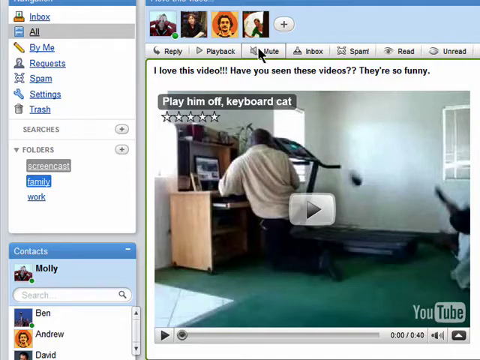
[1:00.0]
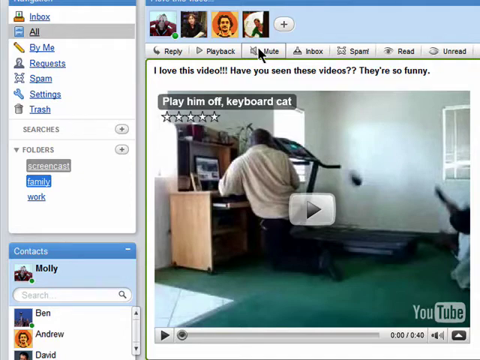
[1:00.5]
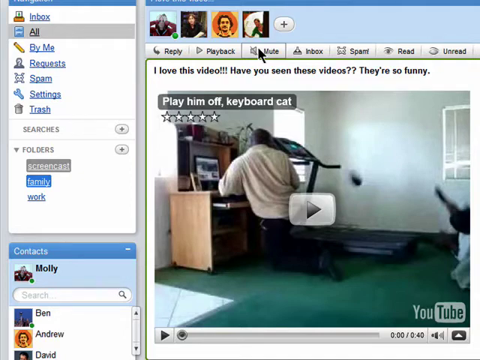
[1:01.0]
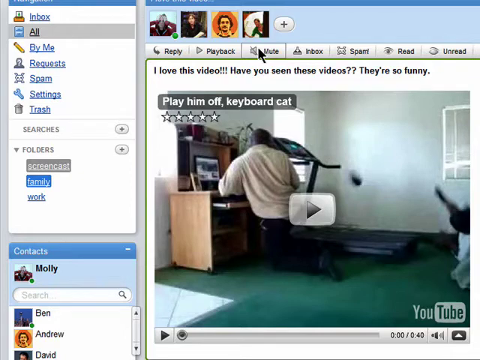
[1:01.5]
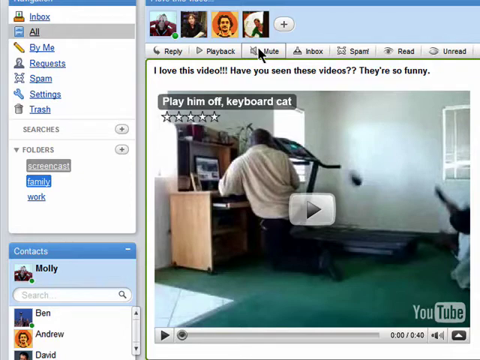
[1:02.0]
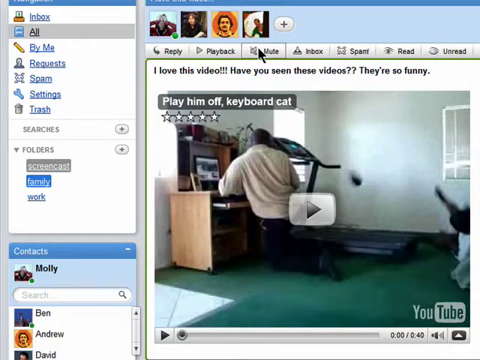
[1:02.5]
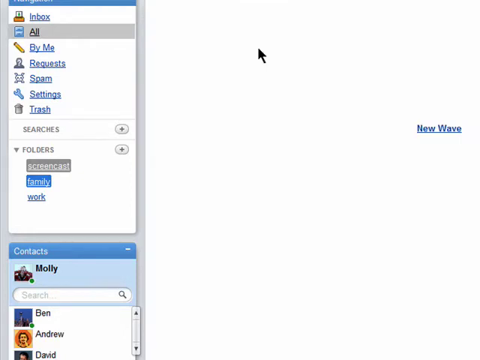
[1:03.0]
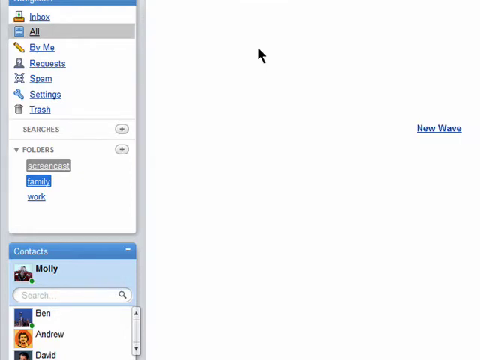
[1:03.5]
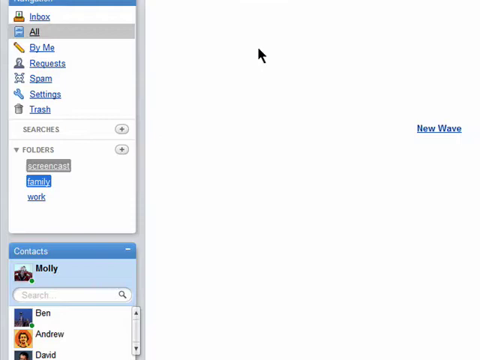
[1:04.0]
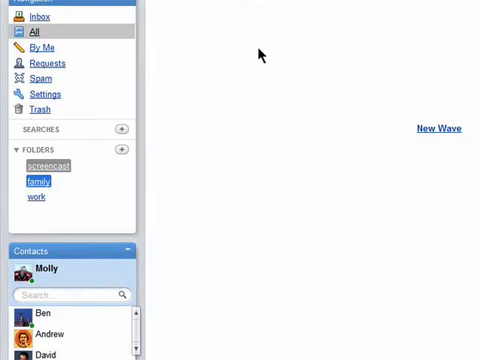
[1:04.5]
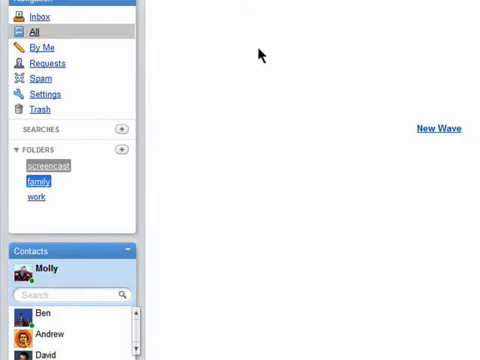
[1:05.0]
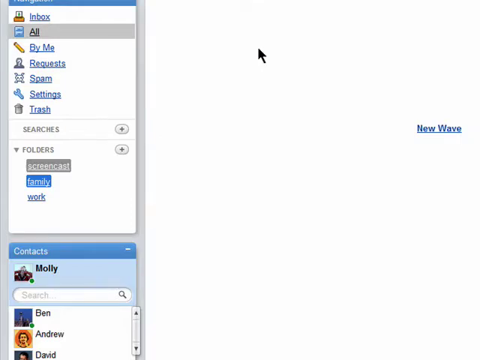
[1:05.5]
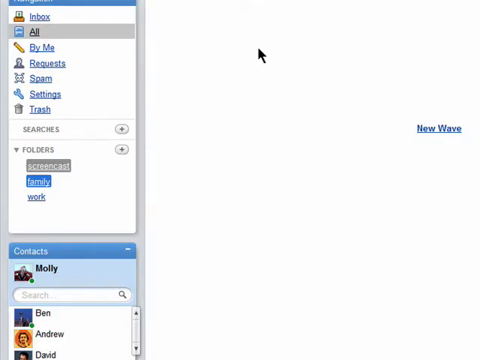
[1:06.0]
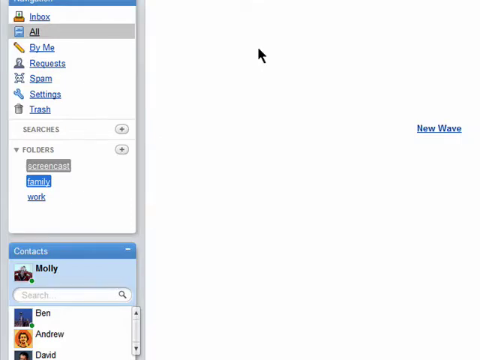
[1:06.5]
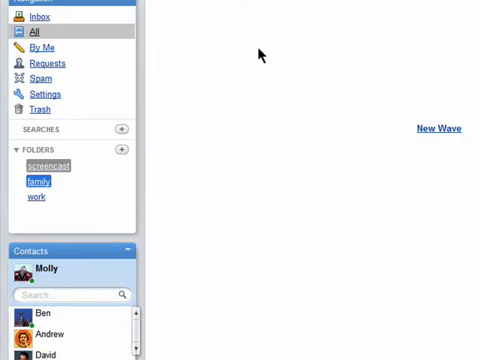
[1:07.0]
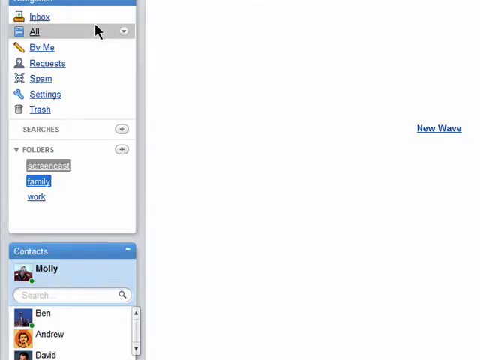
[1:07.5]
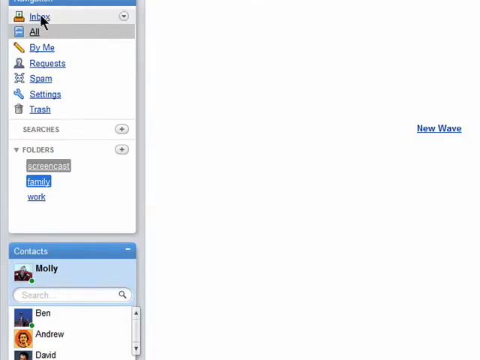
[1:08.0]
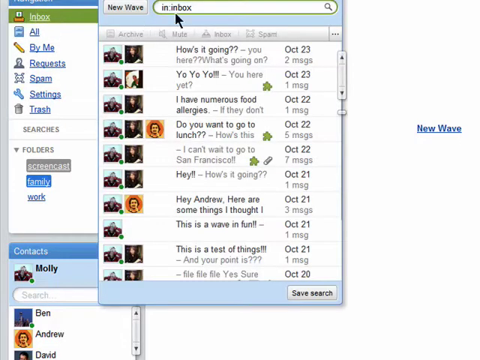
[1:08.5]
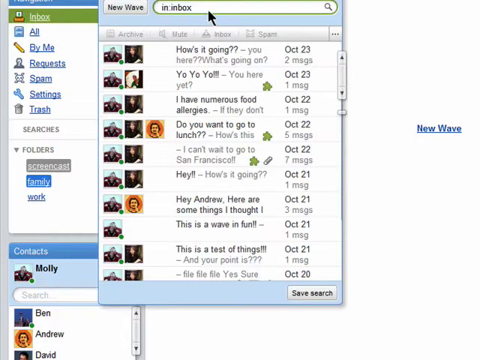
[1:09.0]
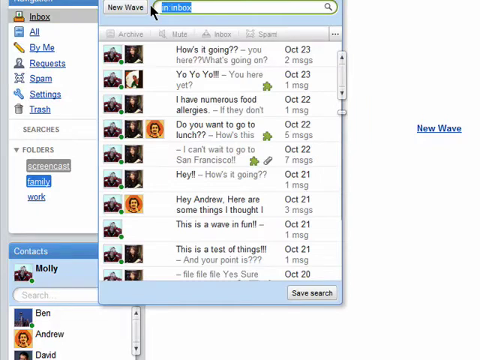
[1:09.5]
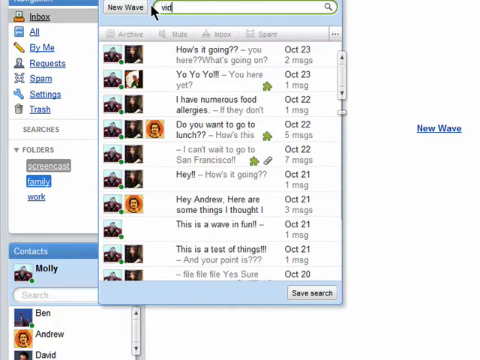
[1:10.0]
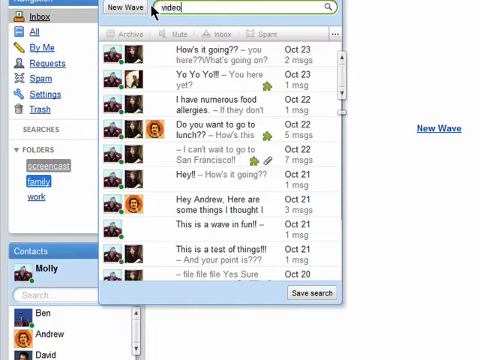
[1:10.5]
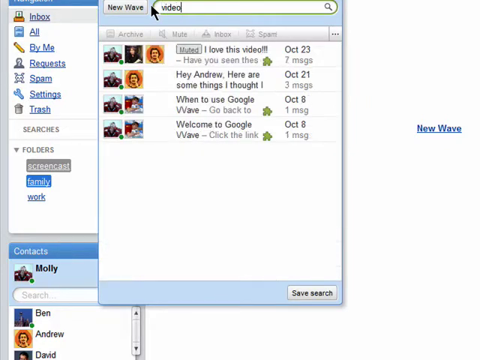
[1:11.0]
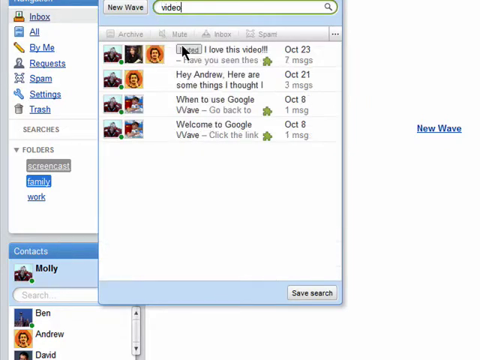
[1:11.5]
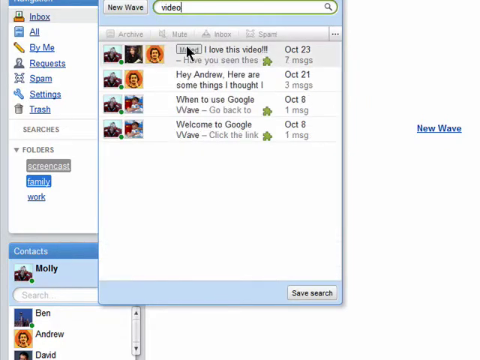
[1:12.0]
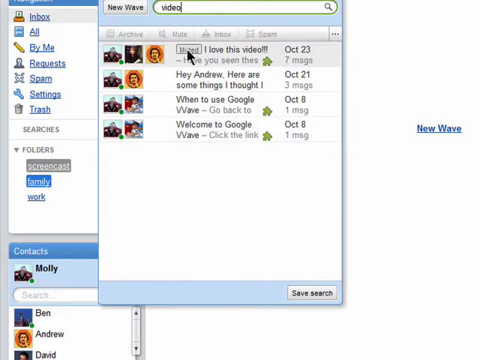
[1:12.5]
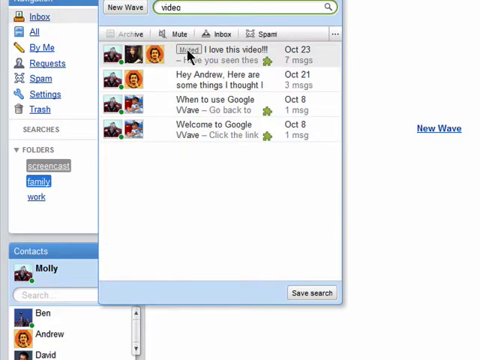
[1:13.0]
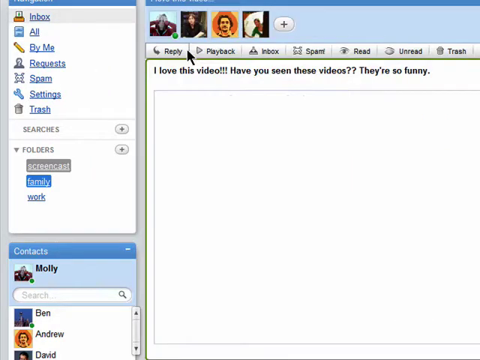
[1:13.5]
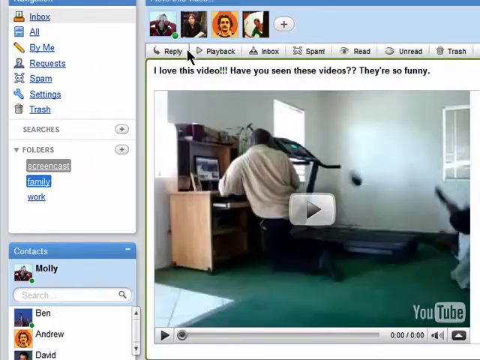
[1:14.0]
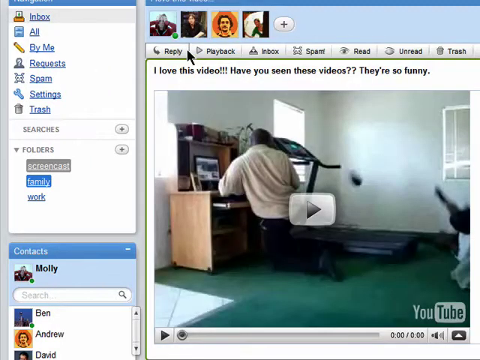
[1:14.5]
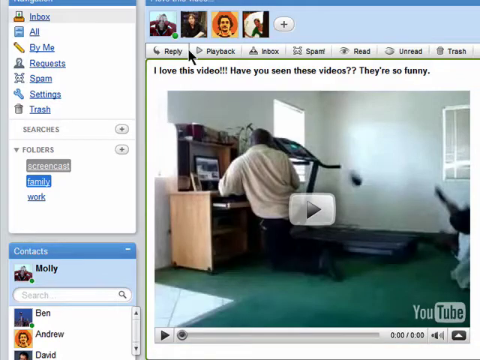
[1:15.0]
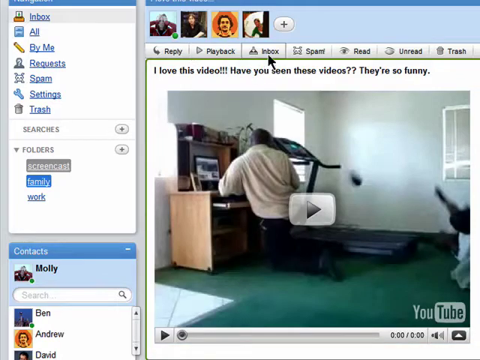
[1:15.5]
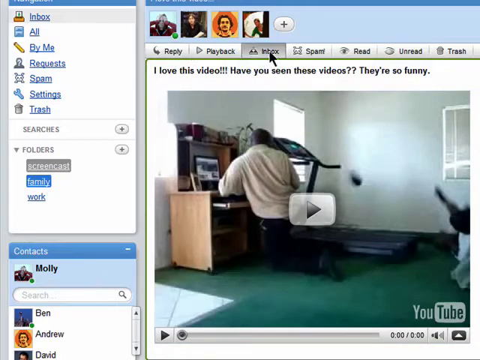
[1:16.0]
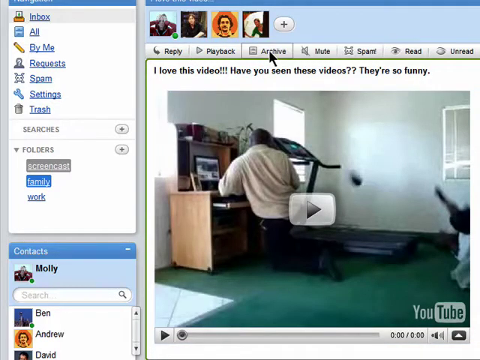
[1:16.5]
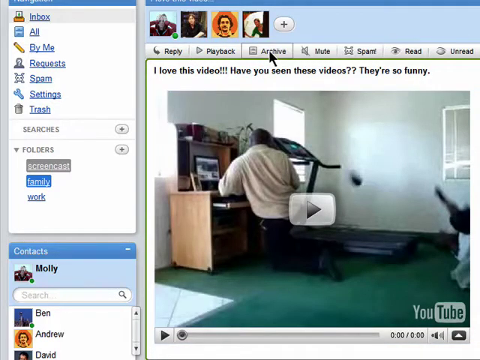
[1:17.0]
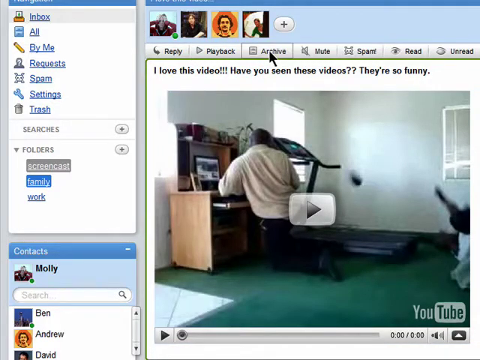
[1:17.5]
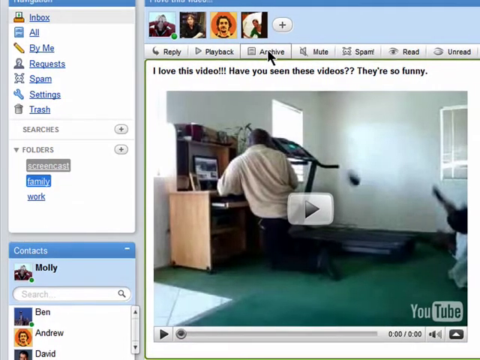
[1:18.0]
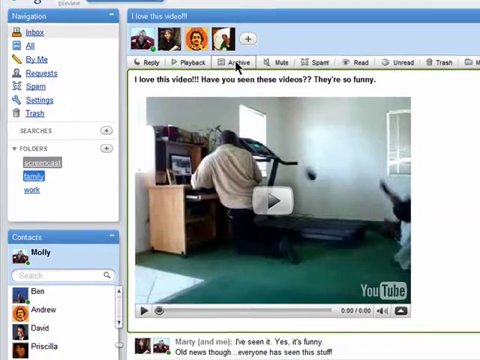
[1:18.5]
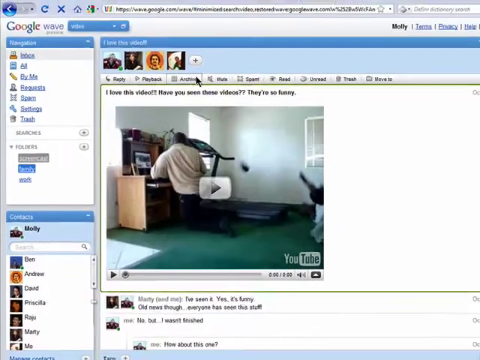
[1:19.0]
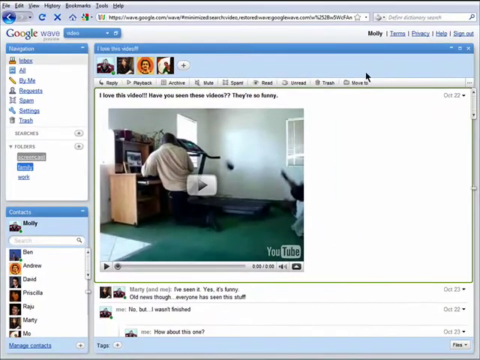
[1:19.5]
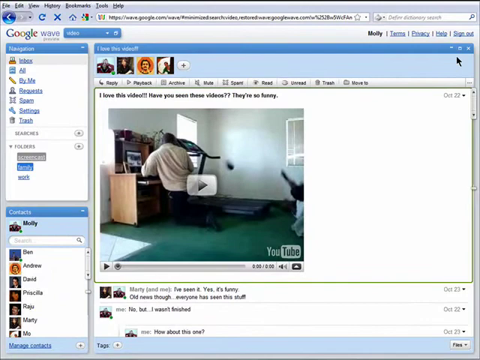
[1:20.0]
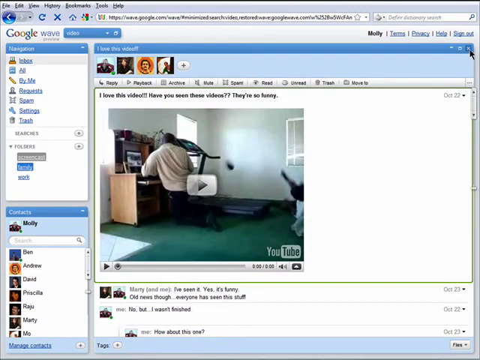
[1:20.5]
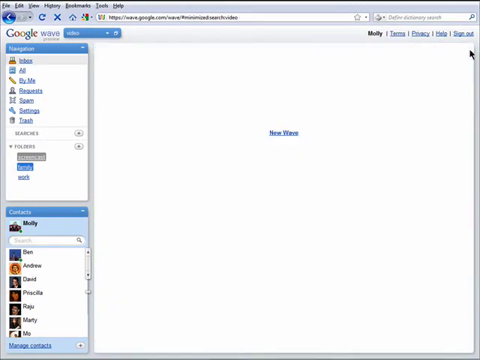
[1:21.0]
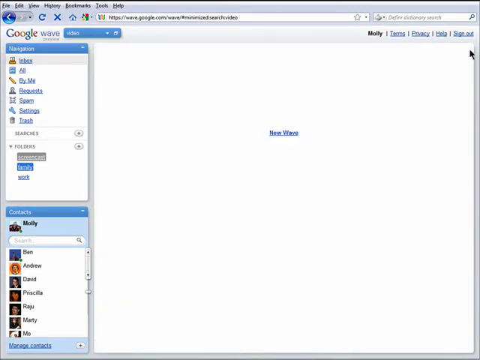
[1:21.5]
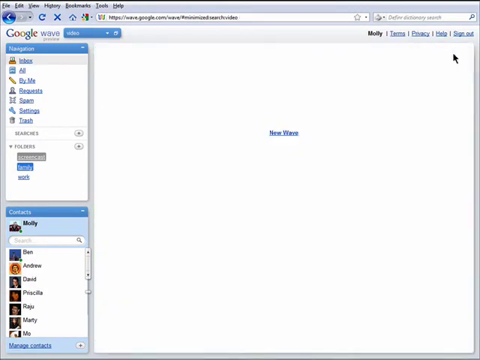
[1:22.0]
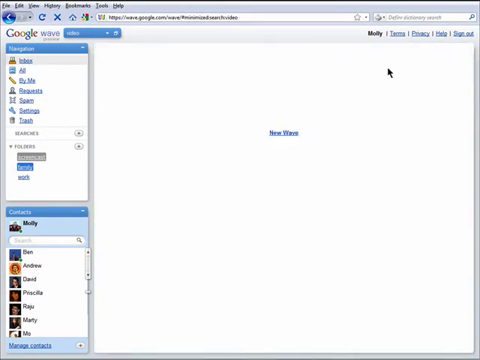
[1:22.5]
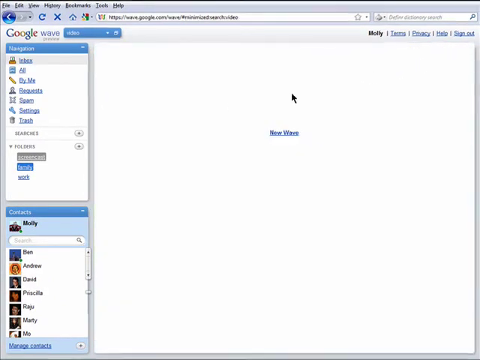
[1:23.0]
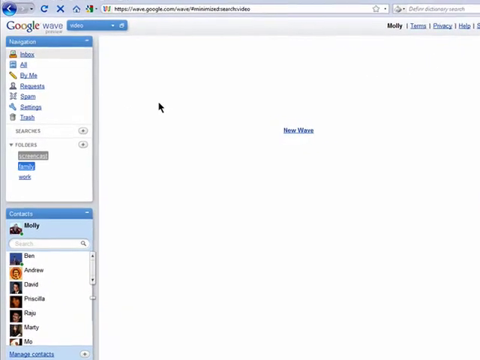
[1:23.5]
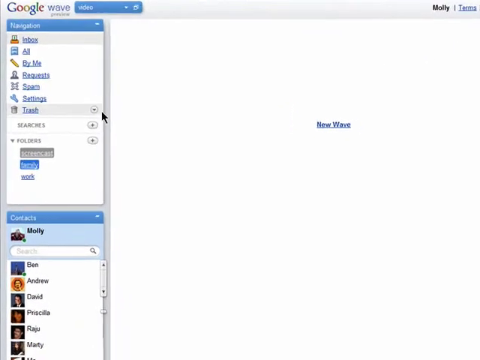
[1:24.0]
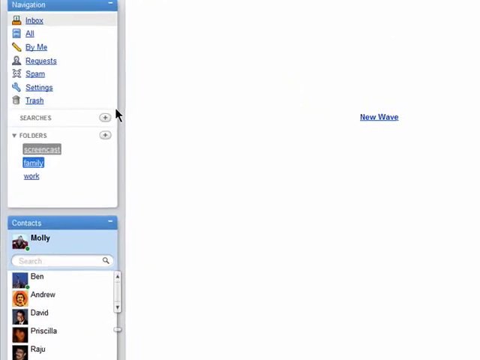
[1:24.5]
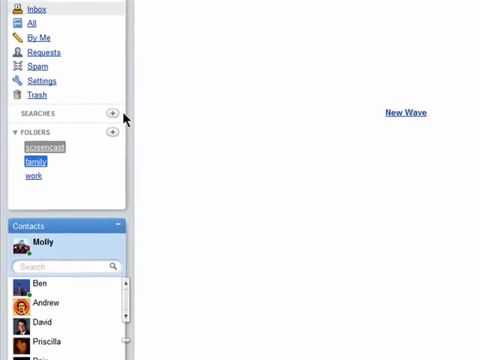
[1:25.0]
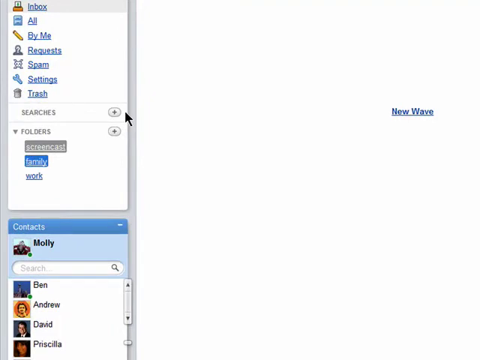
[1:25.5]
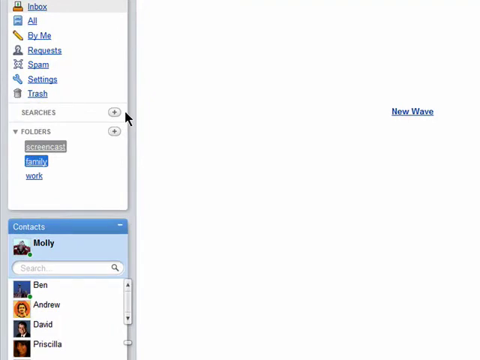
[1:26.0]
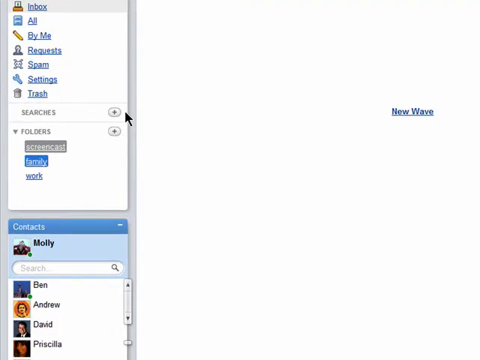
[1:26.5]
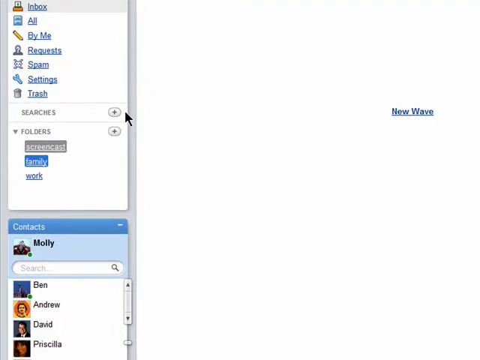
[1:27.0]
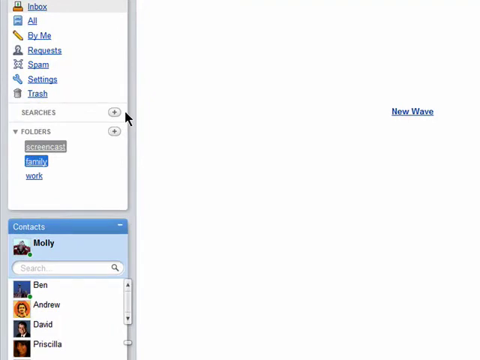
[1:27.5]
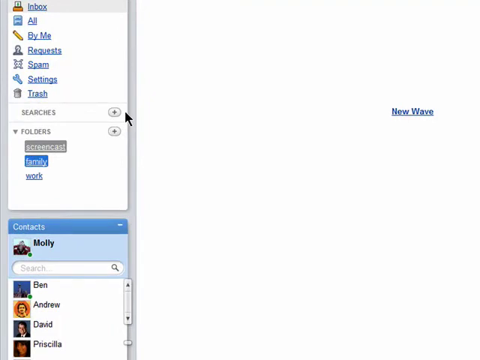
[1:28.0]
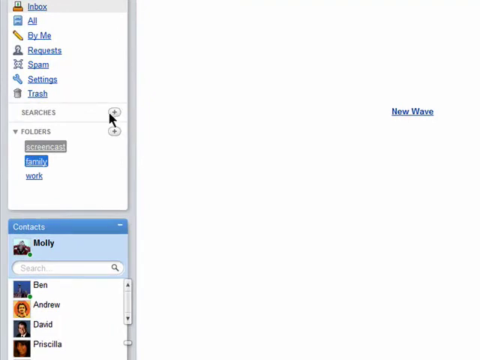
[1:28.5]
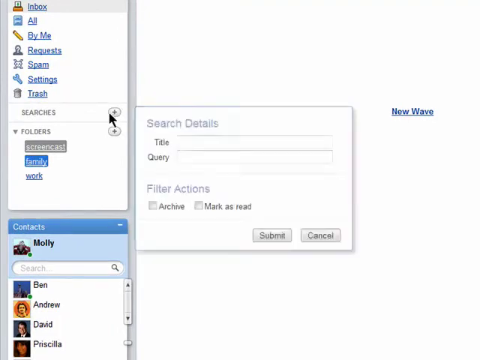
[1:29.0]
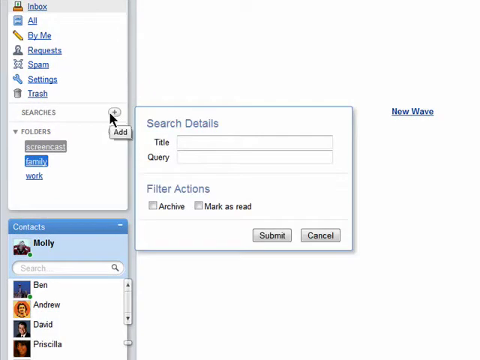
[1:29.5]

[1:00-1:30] The navigation is on the left: the inbox with a little emblem to its left, all, by me with a pencil, spam, settings and trash. Right above the video on the right side are options: replay, play, playback, mute, inbox, spam, read and unread. Above that are thumbnail pictures of some of the people he has chatted with. The video shows "play them off keyboard cats". The guy clicks up, and the area to the right of the navigation where the video was becomes a white screen with "new wave". He clicks the inbox again, highlights it, clicks the video again, and then clicks where it says muted, which brings back the guy next to the desk. He clicks archive once and the view changes. The view then zooms out, going all the way to the right, where it says "I love this video". He clicks a little white X and exits out of the video, leaving a white screen with only "new wave" centered in the white space. He moves the black cursor next to searches, where there is a plus button, and clicks it. A "search details" pop-up appears with text fields for title and query, plus filter actions: archive and mark as read.